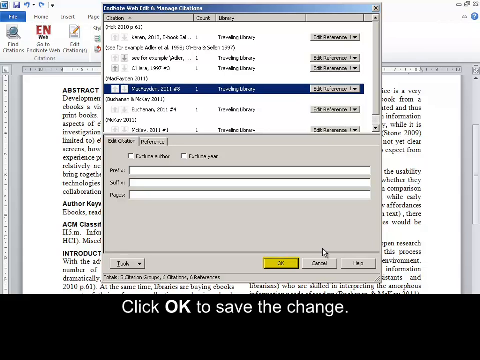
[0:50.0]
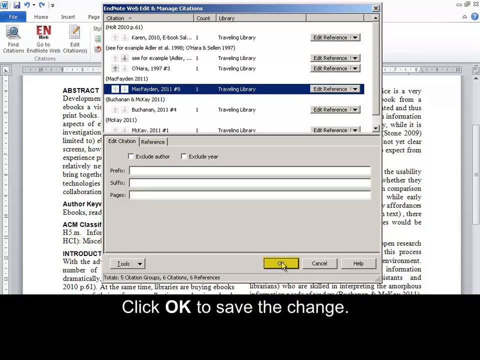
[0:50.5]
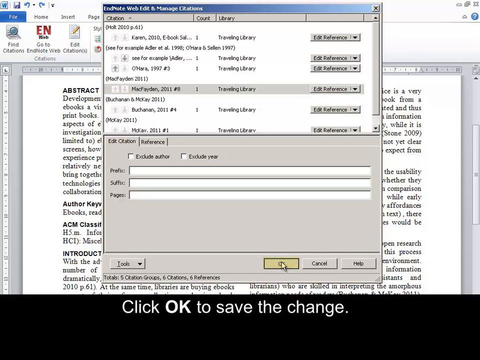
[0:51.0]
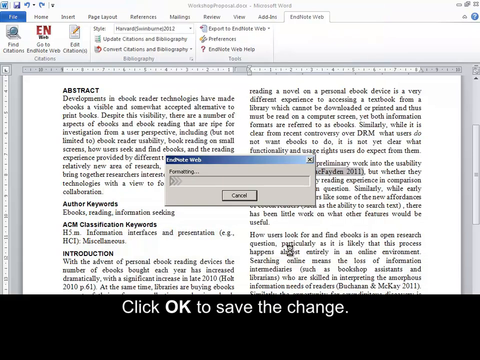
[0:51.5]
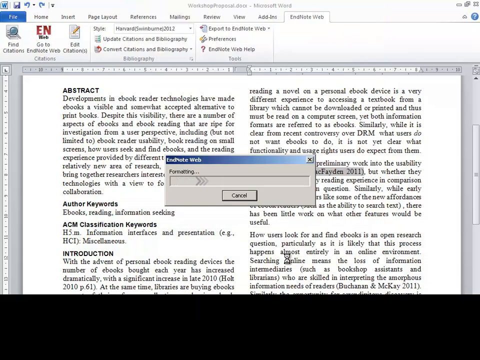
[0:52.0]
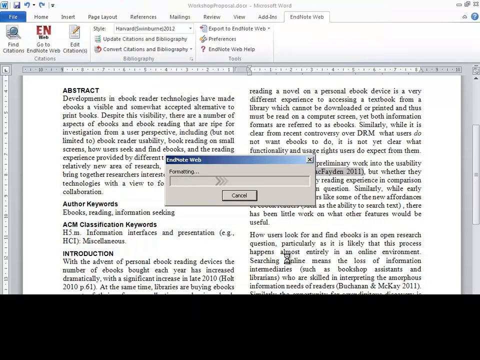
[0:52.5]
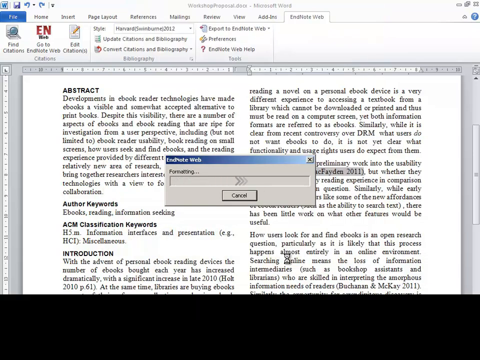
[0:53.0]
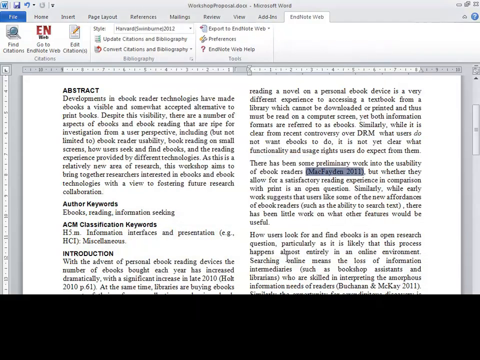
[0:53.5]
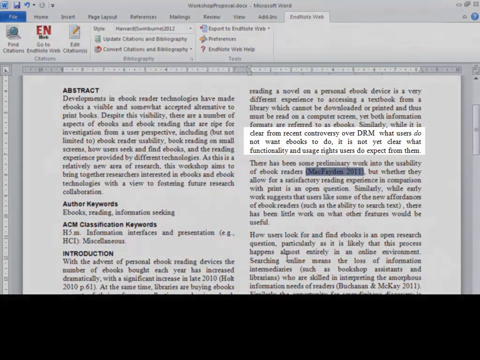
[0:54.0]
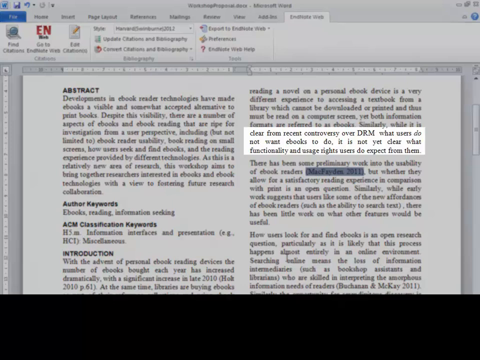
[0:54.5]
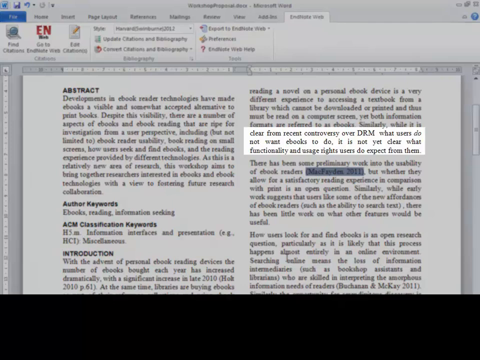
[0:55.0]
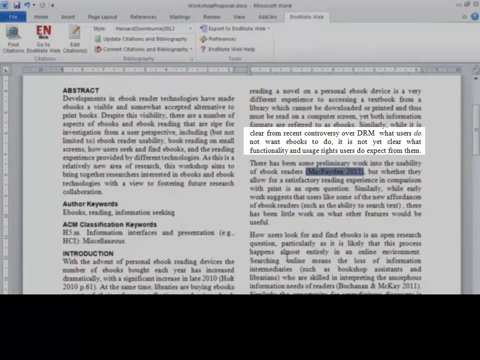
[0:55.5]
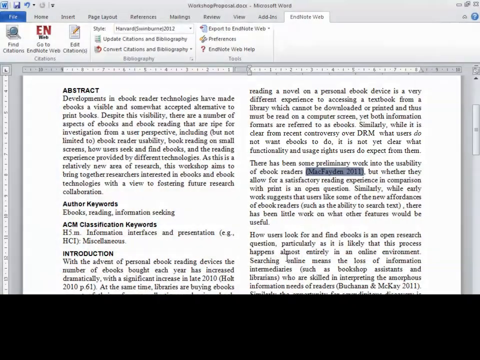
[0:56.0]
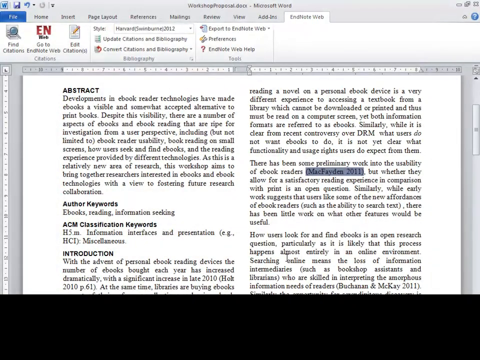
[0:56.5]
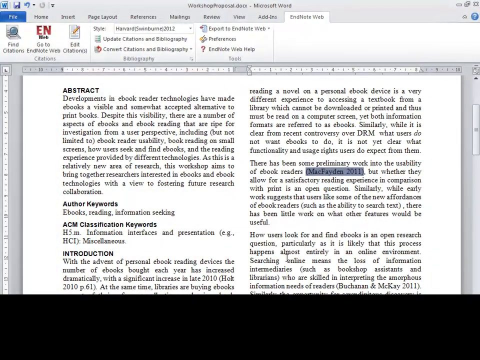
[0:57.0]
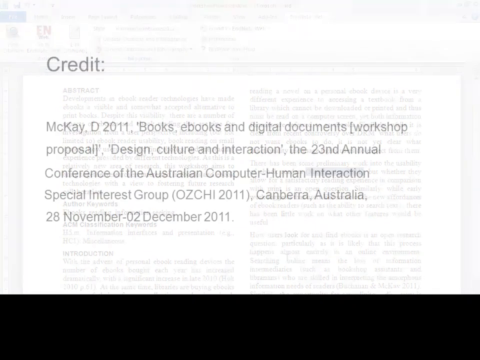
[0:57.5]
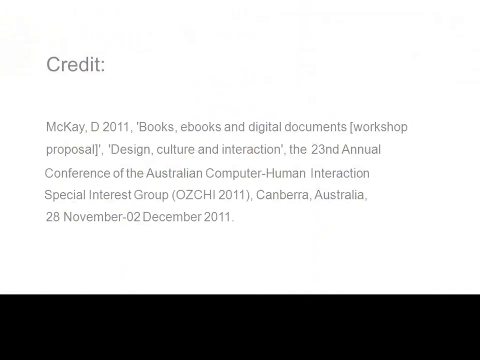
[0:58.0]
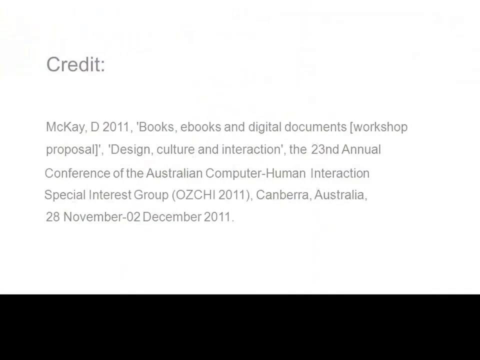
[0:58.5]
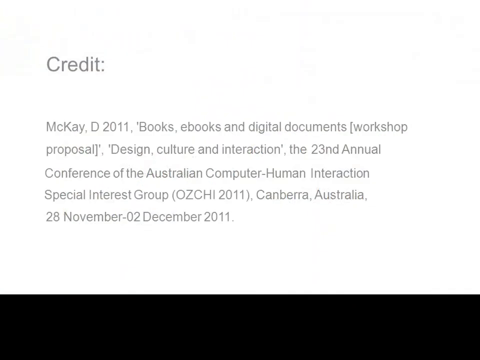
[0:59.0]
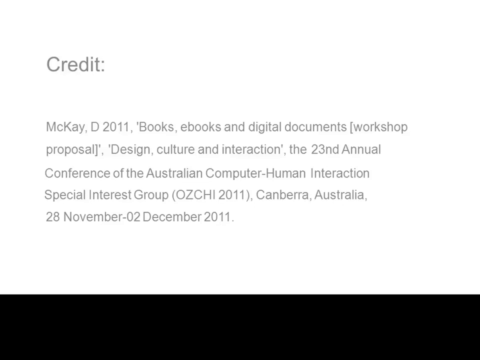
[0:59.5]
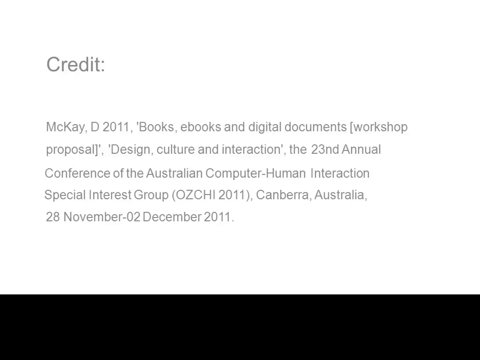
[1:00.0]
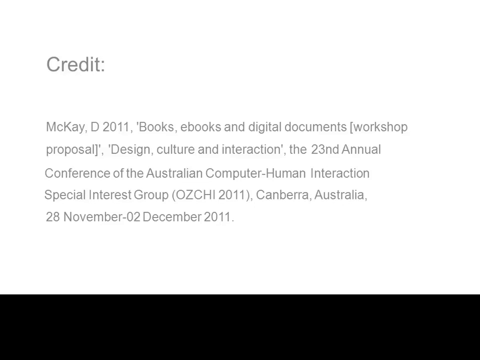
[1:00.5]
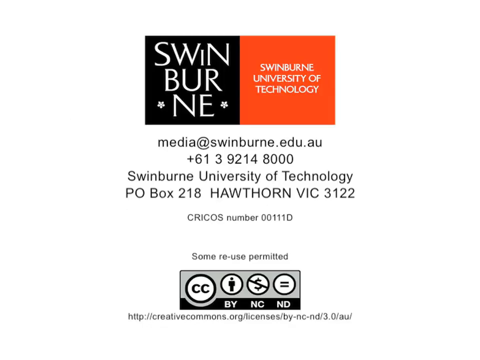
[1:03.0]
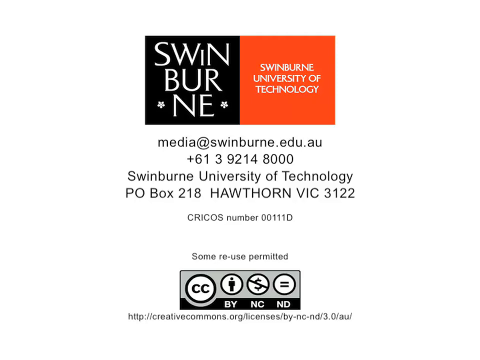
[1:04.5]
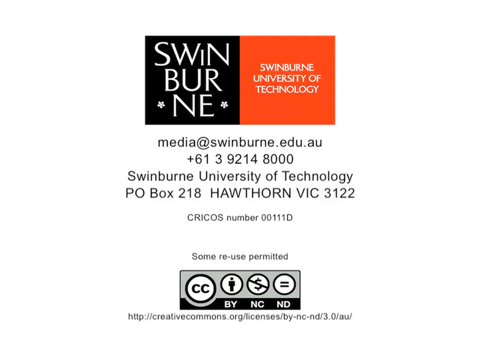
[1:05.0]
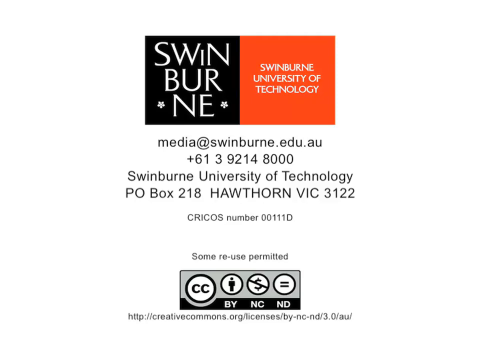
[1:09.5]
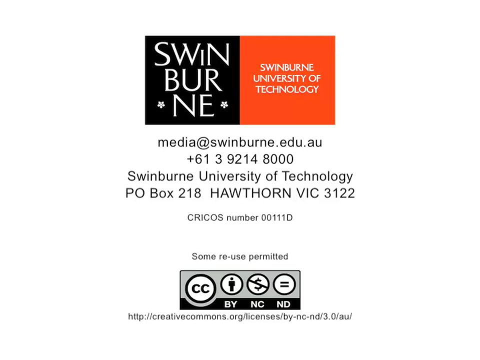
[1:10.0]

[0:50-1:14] OK is clicked, and a window appears saying that the document is formatting, with an option to cancel. In the text, the area where the change was made is highlighted, and the quotation is no longer in the sentence. A credits slide then appears with the contacts of the university and the people who made the slide. It also references an event held in Canberra, Australia, from the 28th of November to the 2nd of December 2011: "Books and Digital Documents Workshop Proposal, Design, Culture and Interaction", a work presented by Mackay in 2011 at the 23rd Annual Conference of the Australian Computer Human Interaction Special Interest Group.